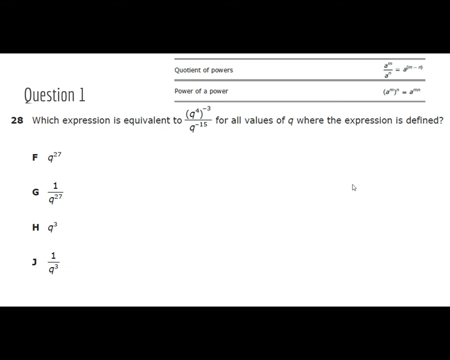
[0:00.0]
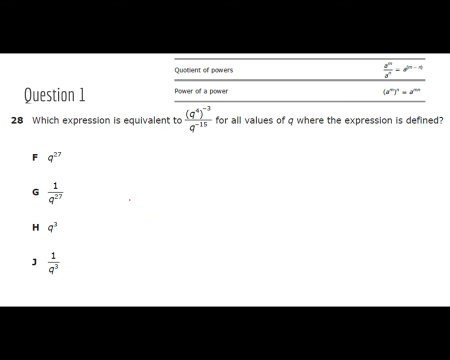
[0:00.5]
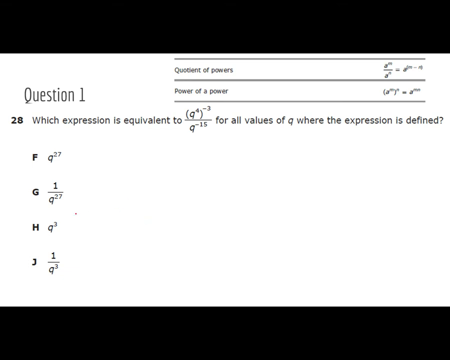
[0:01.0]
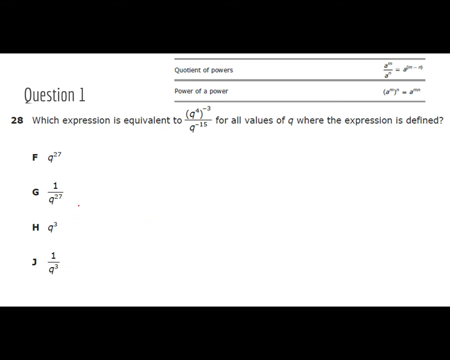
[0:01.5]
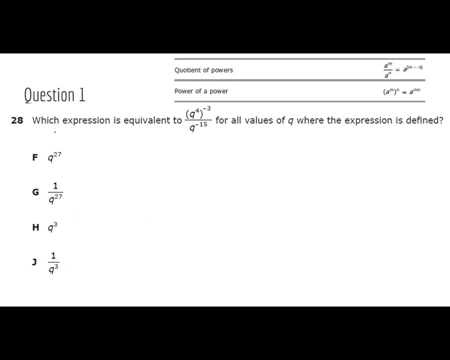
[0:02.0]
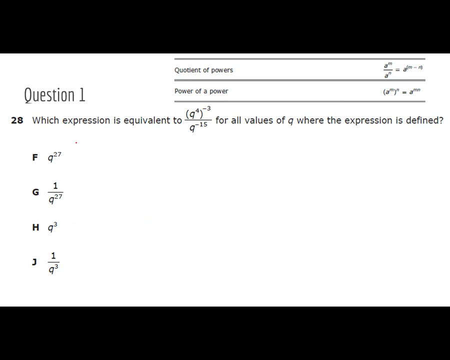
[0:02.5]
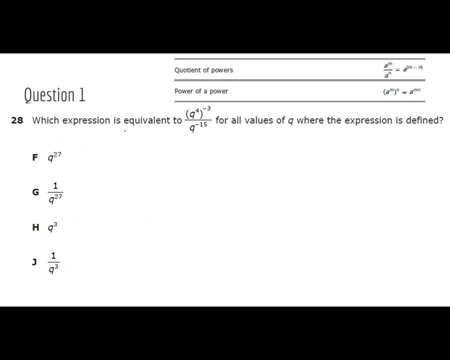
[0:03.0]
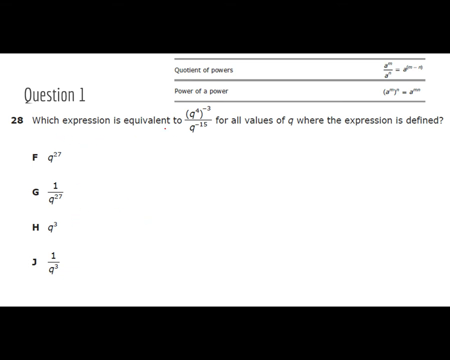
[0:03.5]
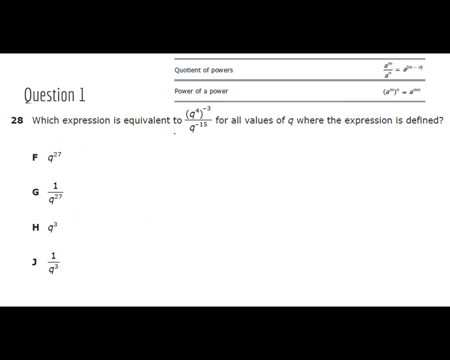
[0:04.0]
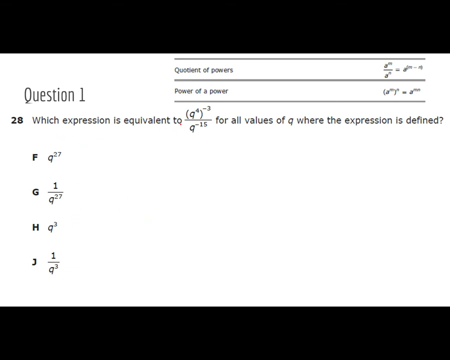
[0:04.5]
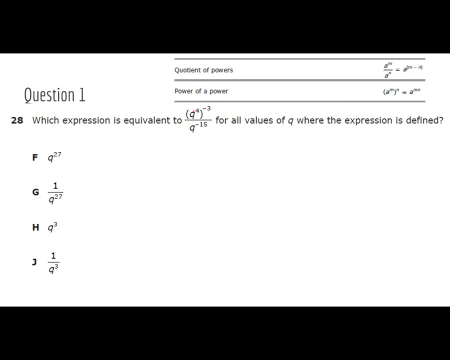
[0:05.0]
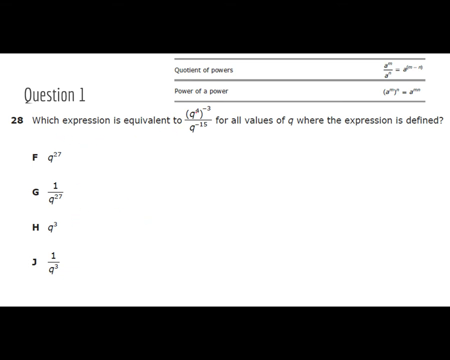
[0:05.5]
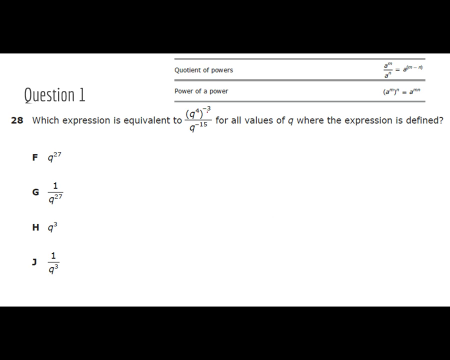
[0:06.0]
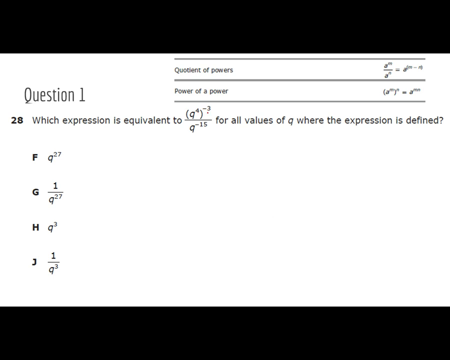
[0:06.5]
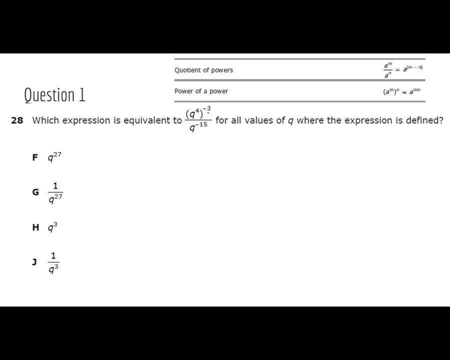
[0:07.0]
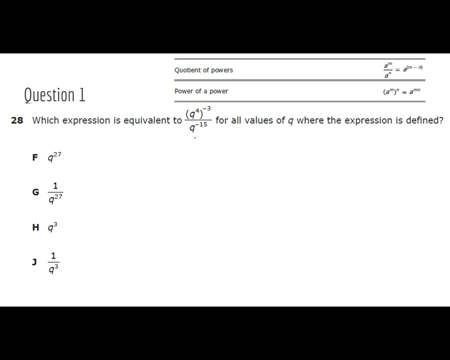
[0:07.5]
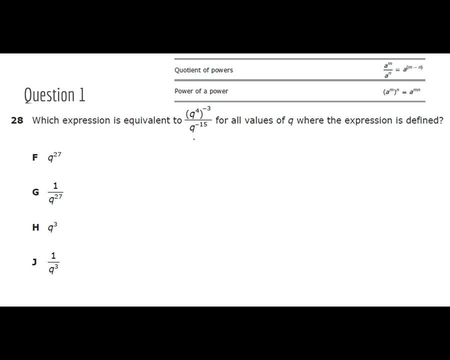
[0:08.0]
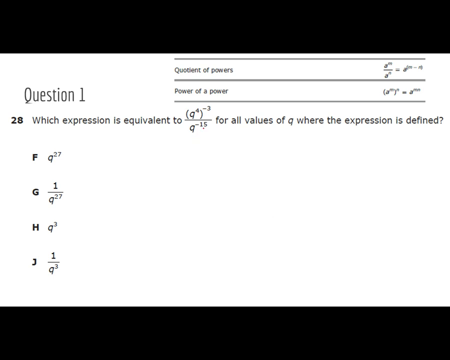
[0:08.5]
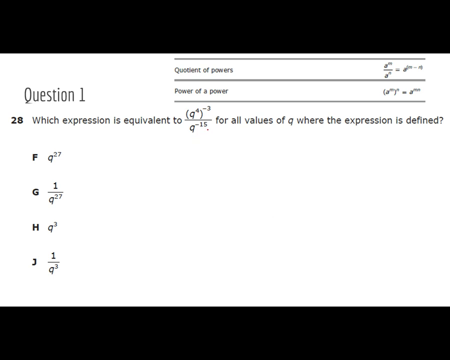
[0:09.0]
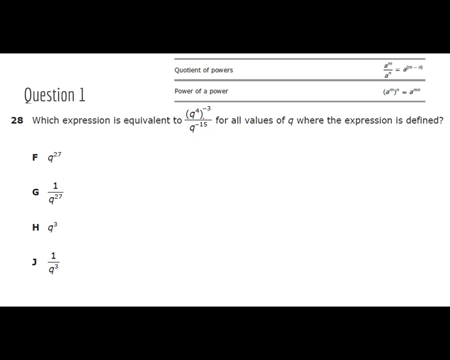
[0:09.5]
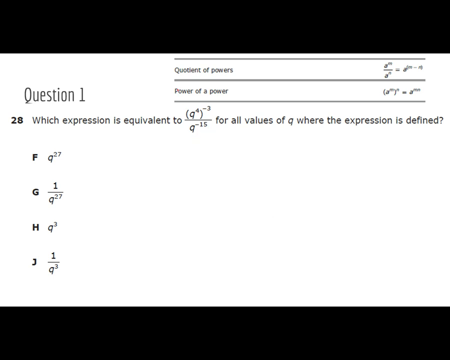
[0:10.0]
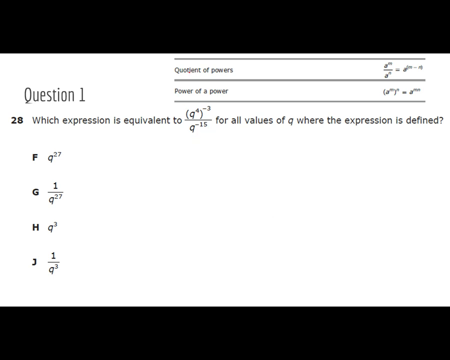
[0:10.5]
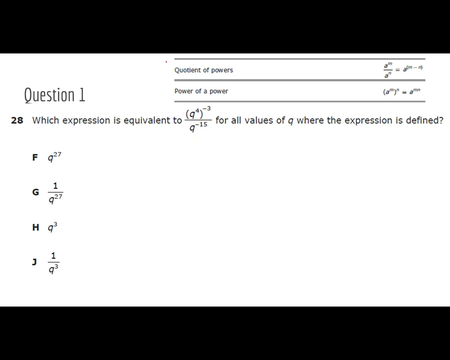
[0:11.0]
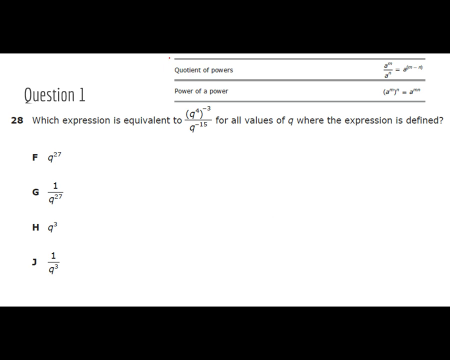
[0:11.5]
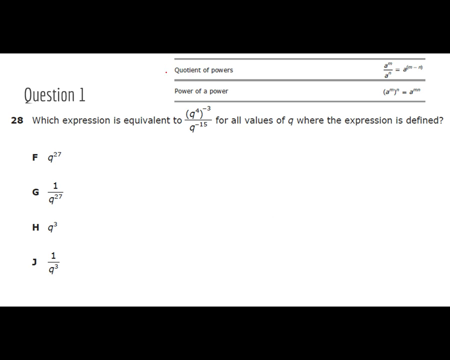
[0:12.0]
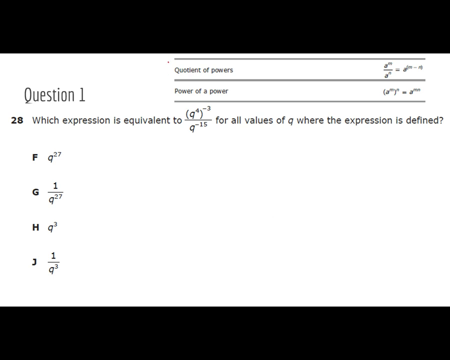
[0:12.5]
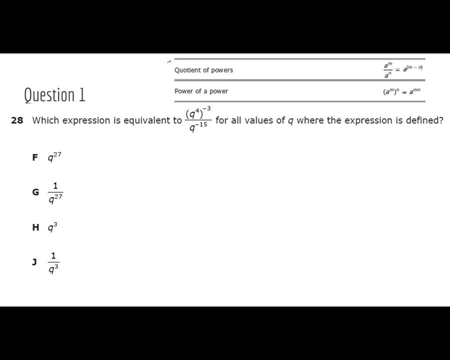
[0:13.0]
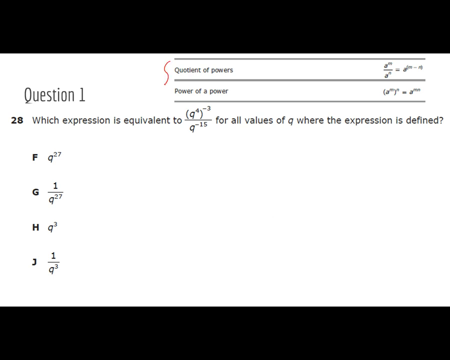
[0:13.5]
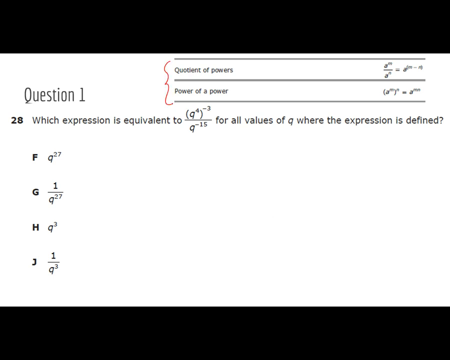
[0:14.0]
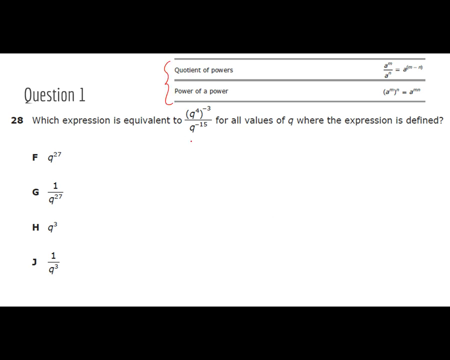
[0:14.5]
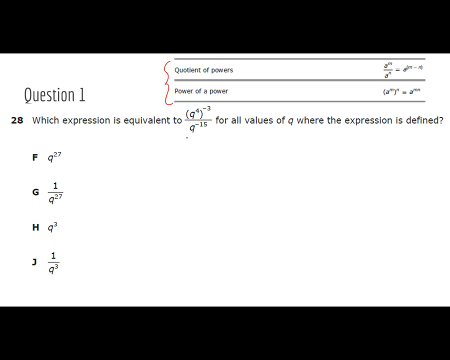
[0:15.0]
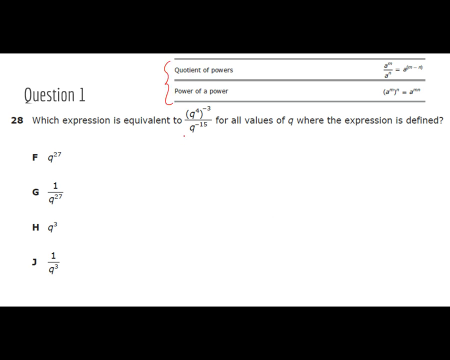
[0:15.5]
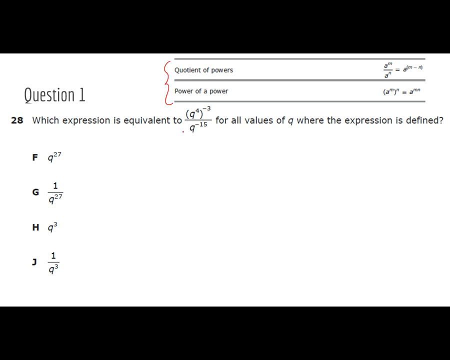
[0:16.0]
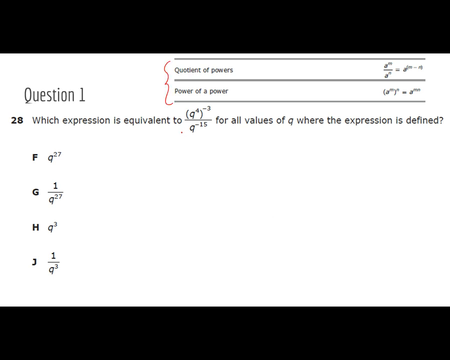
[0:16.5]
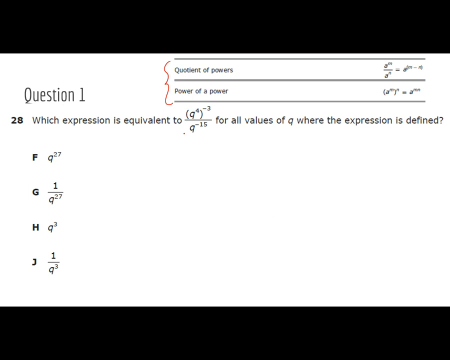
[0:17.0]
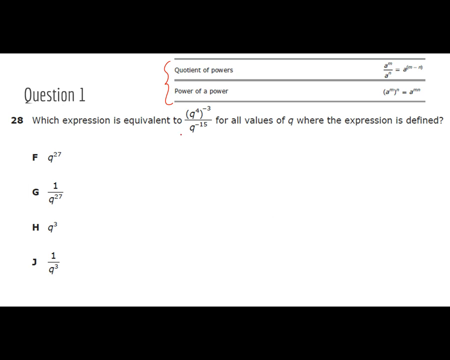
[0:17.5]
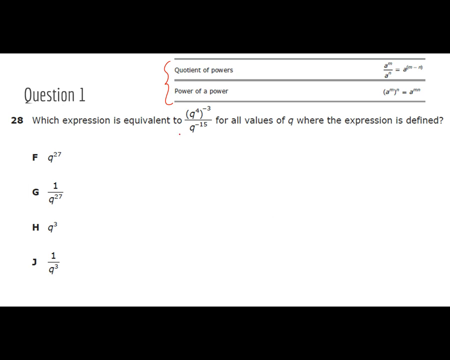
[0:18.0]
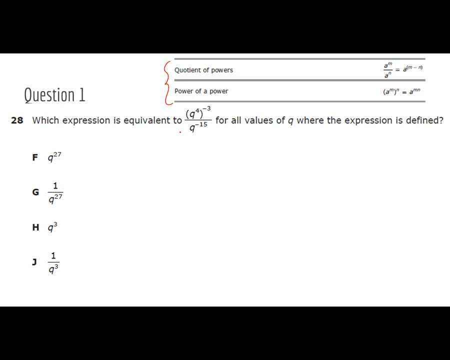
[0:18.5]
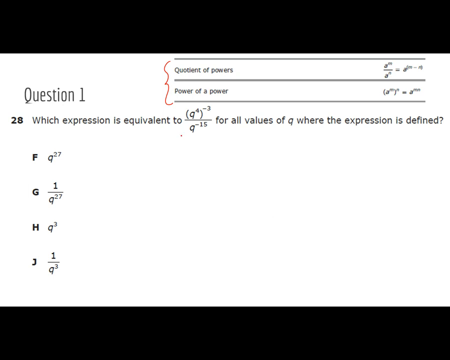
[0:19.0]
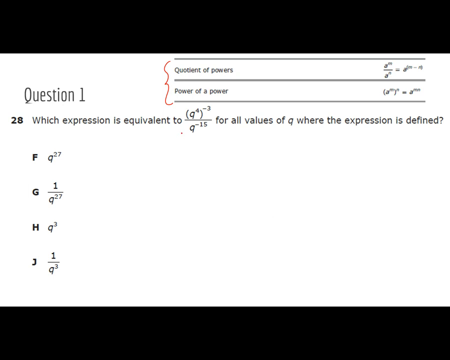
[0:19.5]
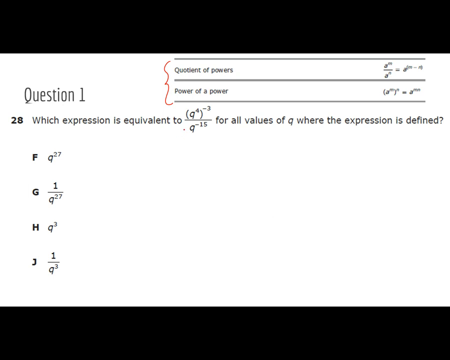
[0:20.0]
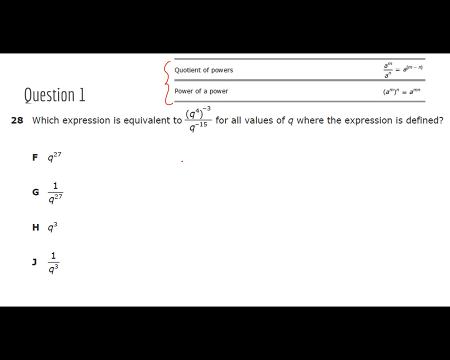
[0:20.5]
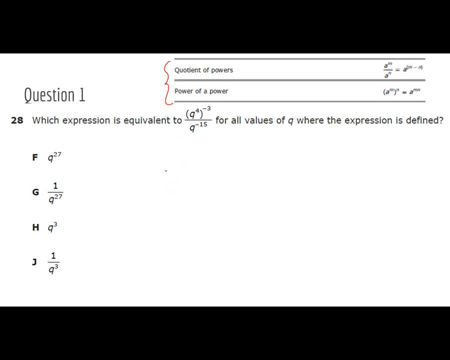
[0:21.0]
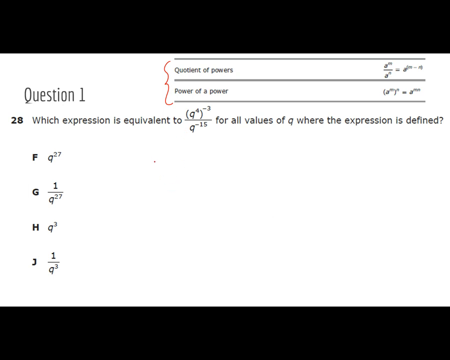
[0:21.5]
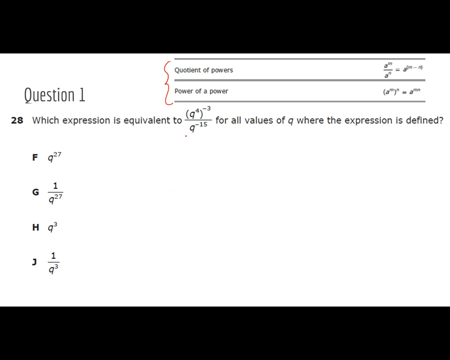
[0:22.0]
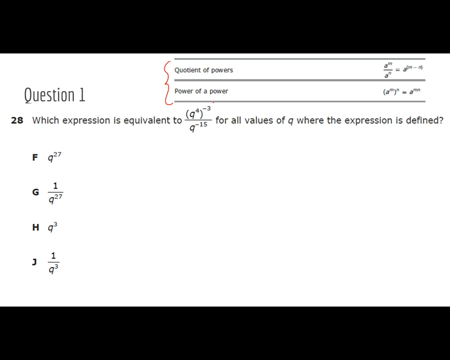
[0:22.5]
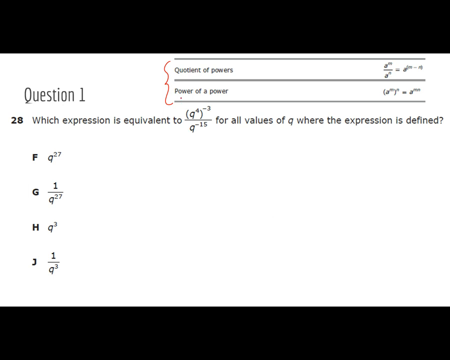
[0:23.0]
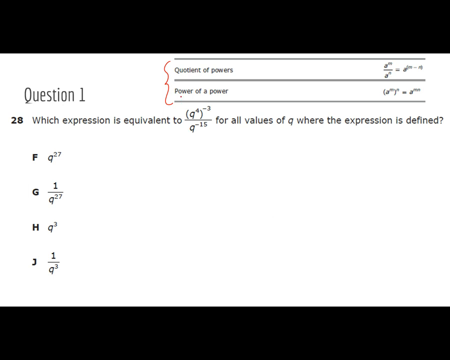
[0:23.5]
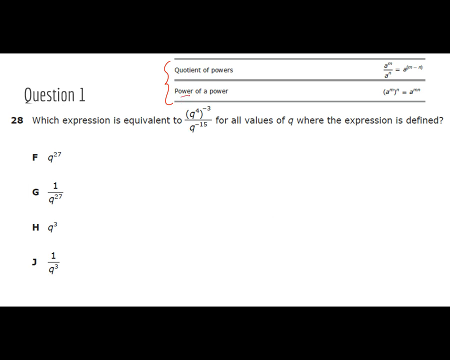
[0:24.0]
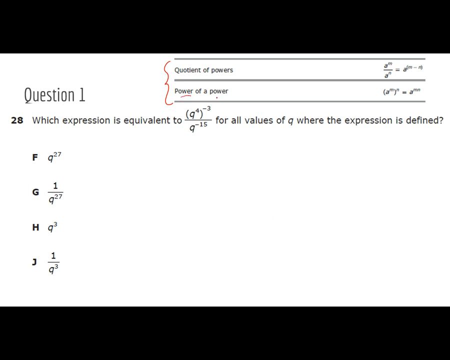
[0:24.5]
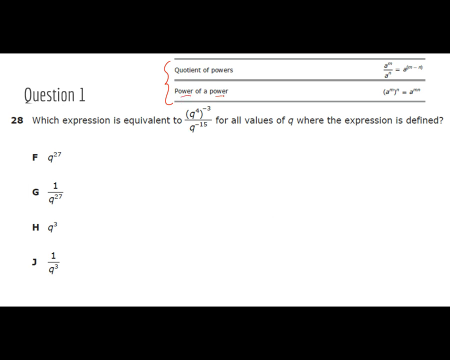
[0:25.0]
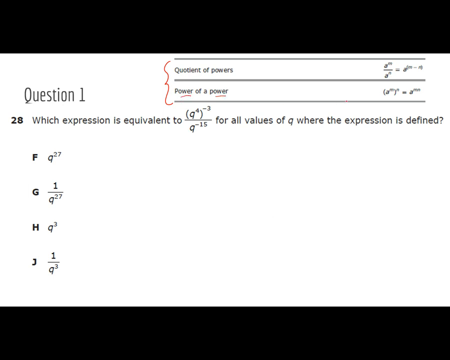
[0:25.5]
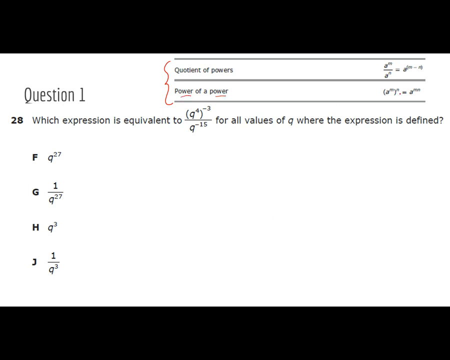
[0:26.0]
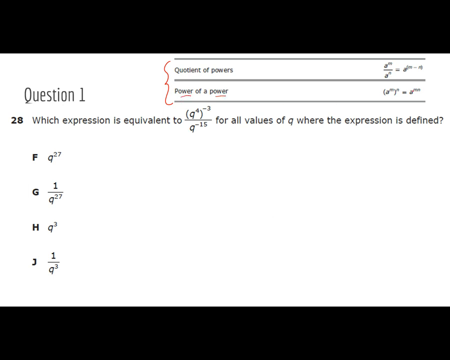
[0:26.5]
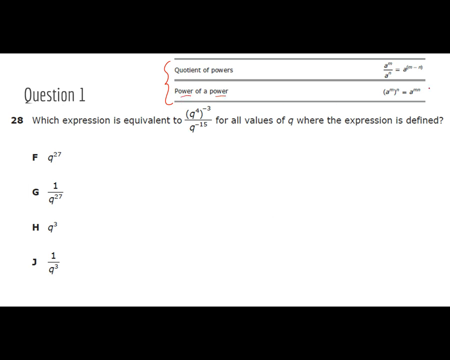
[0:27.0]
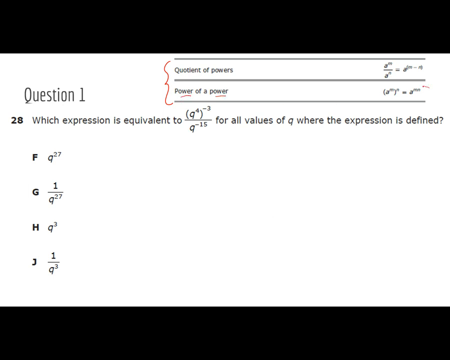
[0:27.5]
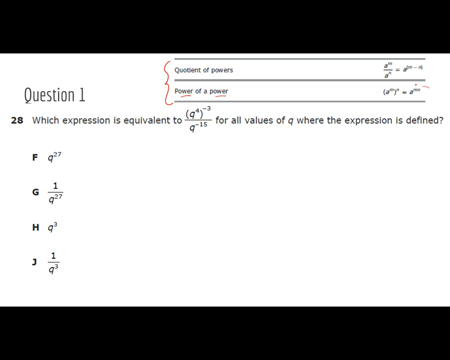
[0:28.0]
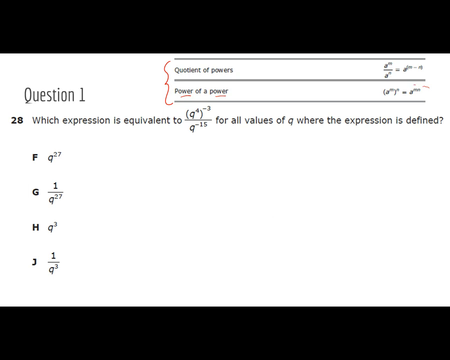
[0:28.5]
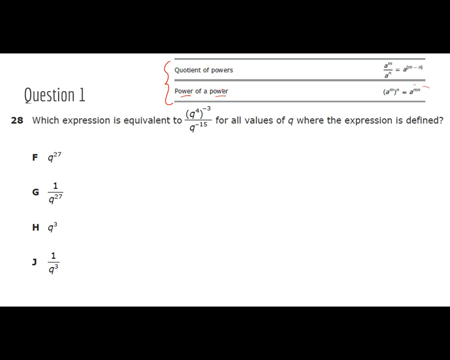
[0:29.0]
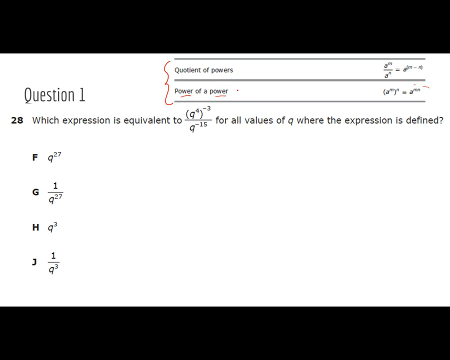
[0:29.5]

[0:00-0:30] A maths question labelled "question one" is on screen, with a bolded sub number, 28. Above it are equations for quotient of powers and power of a power. The question reads: which expression is equivalent to (q to the power of 4) to the power of minus 3, divided by q to the power of minus 15, for all values of q where the expression is defined. Option F is q to the power of 27, G is 1 over q to the power of 27, H is q to the power of 3, and J is 1 over q to the power of 3. A cursor hovers around the question, apparently as the presenter talks about it. The cursor draws a red bracket on the equations for quotient of powers and power of a power, then underlines the word "power" in the phrase "power of a power".